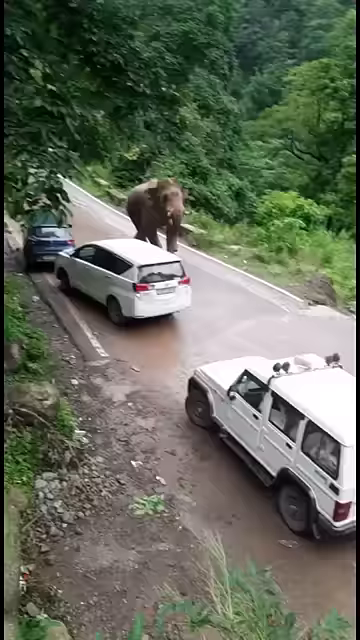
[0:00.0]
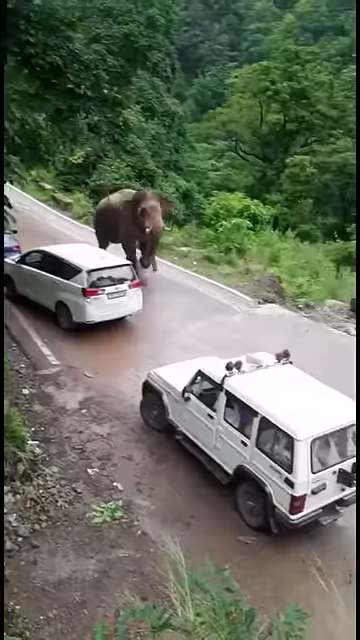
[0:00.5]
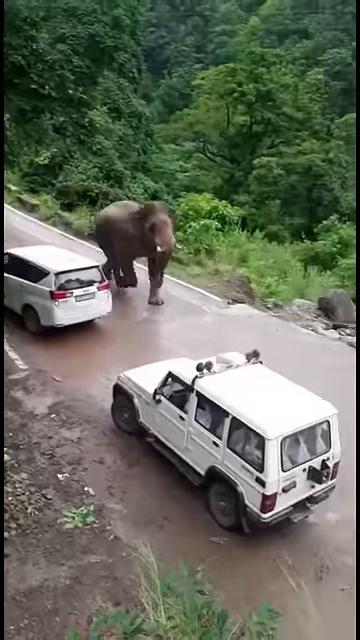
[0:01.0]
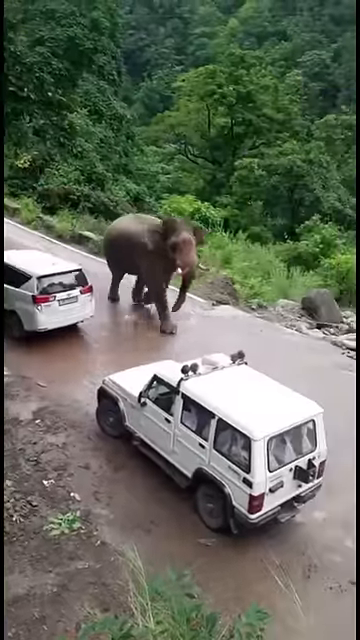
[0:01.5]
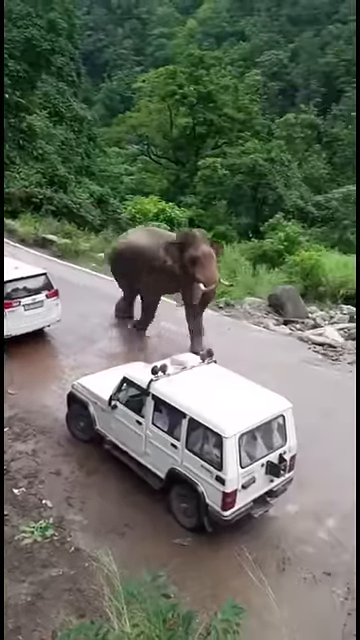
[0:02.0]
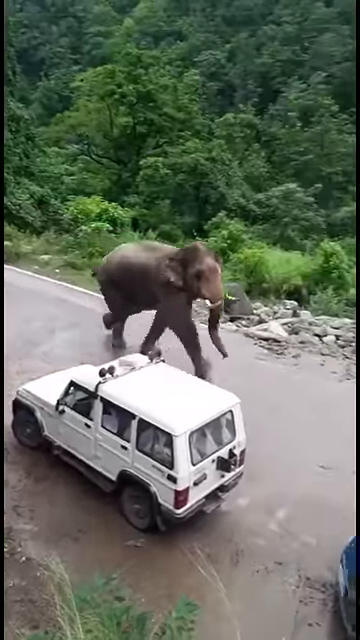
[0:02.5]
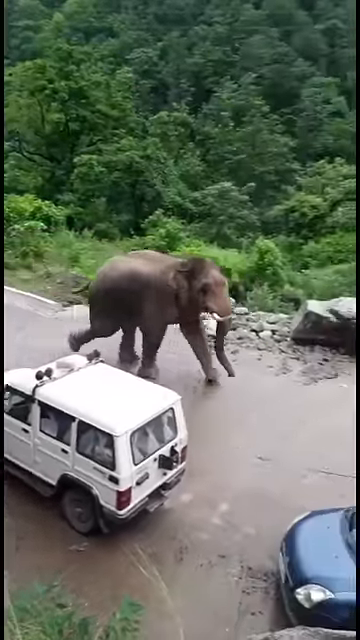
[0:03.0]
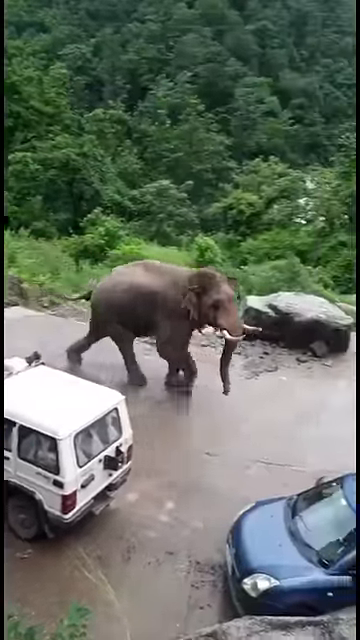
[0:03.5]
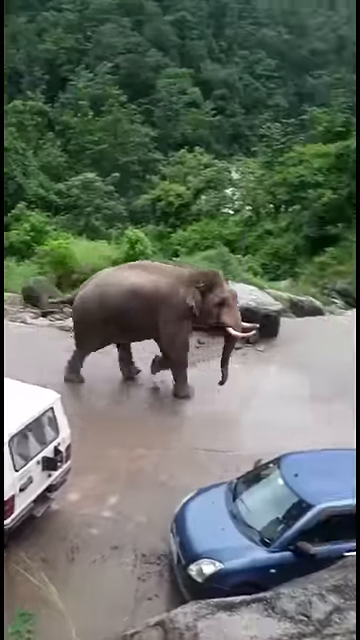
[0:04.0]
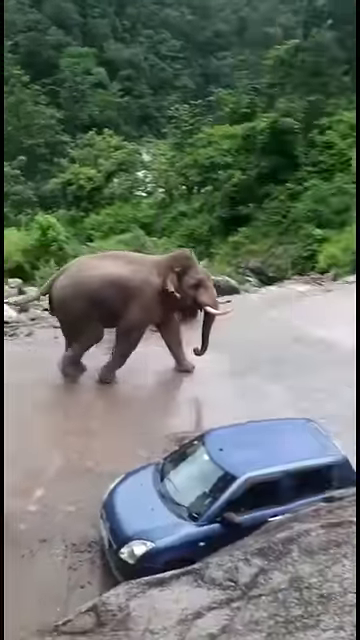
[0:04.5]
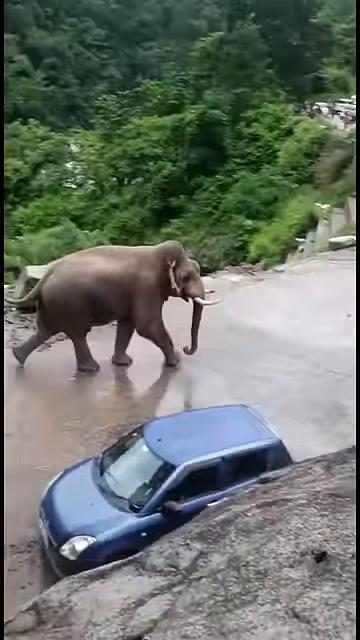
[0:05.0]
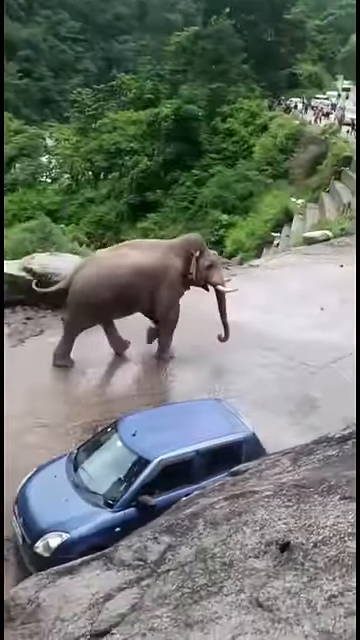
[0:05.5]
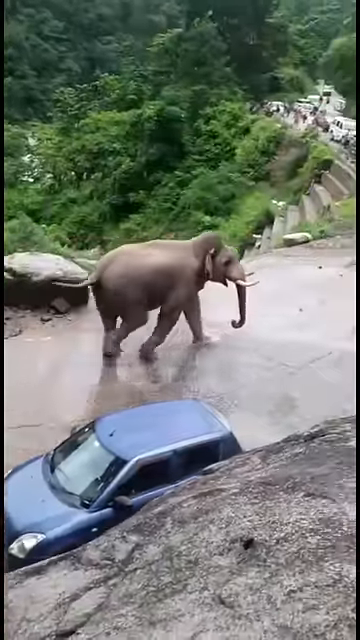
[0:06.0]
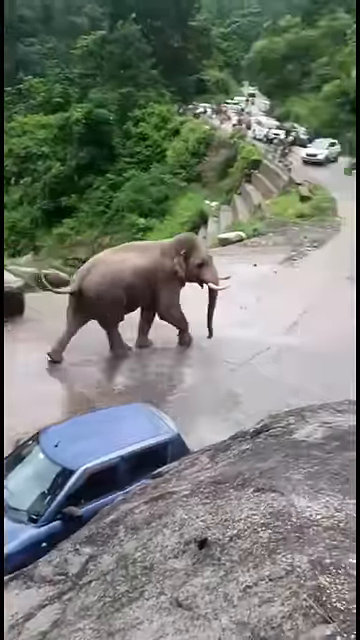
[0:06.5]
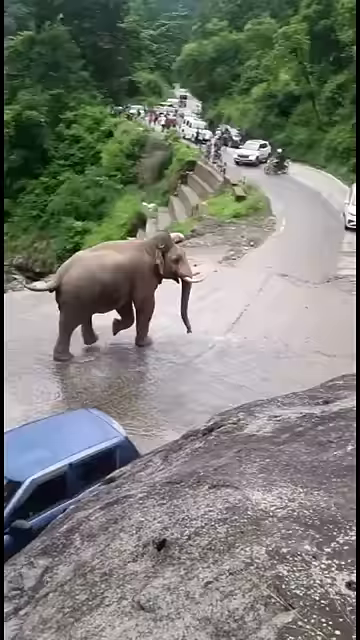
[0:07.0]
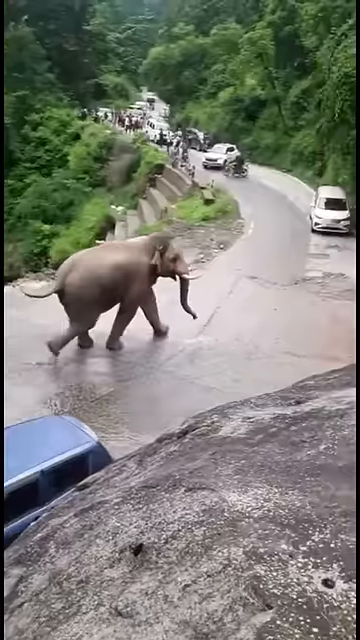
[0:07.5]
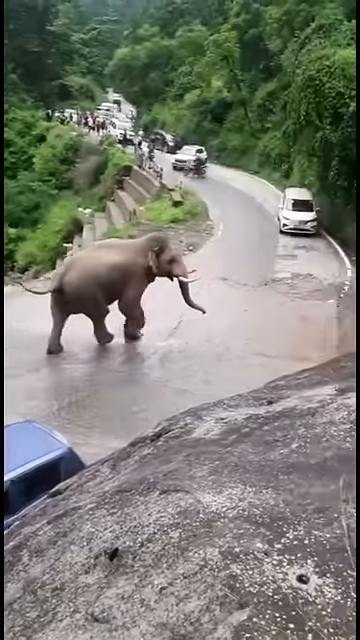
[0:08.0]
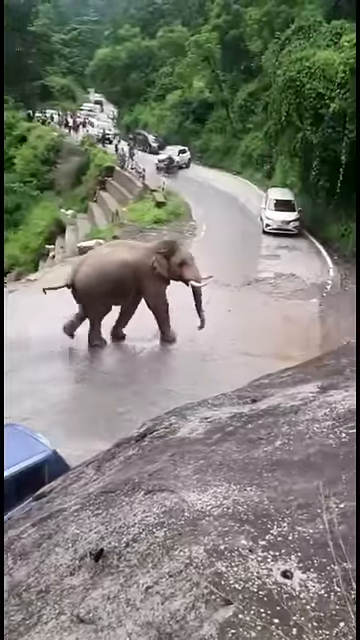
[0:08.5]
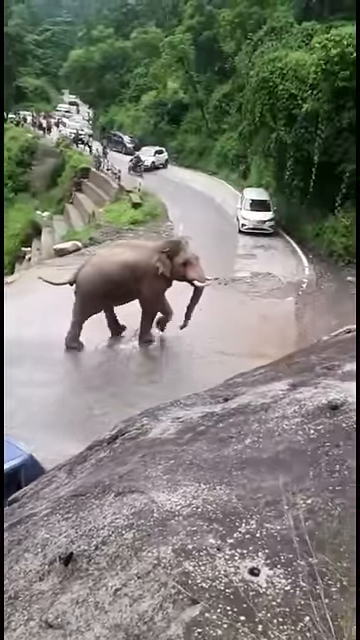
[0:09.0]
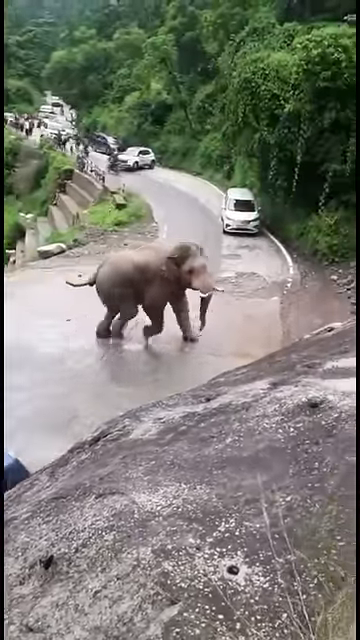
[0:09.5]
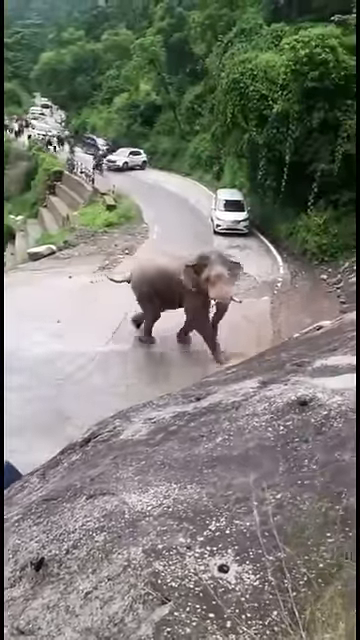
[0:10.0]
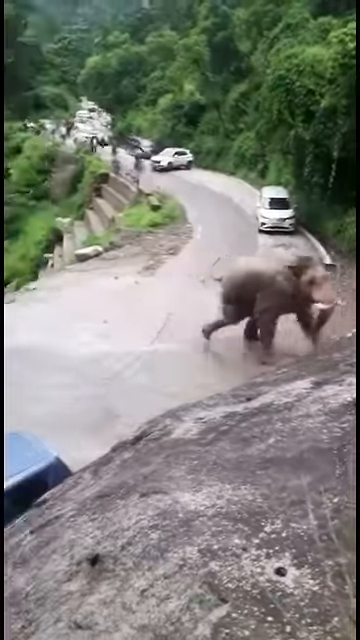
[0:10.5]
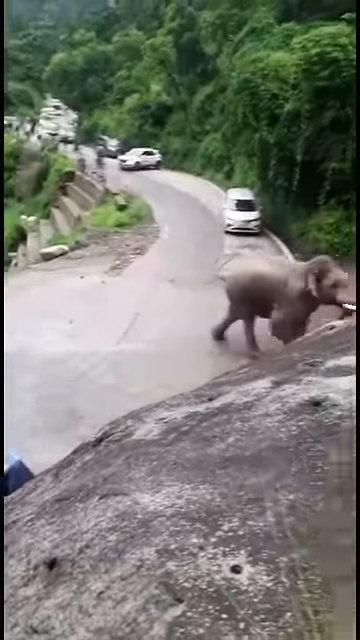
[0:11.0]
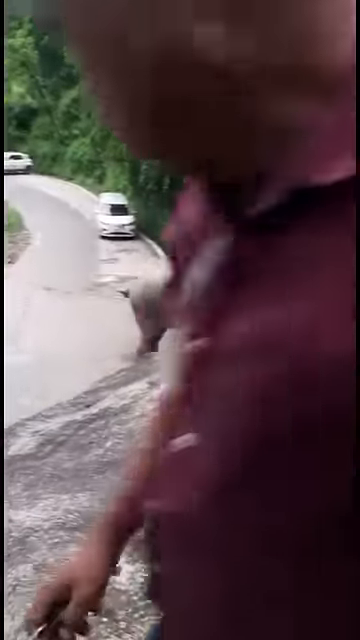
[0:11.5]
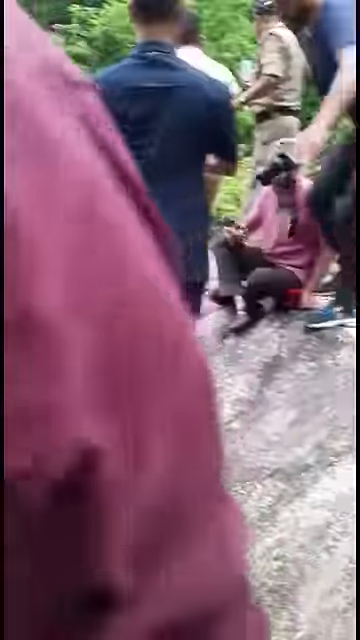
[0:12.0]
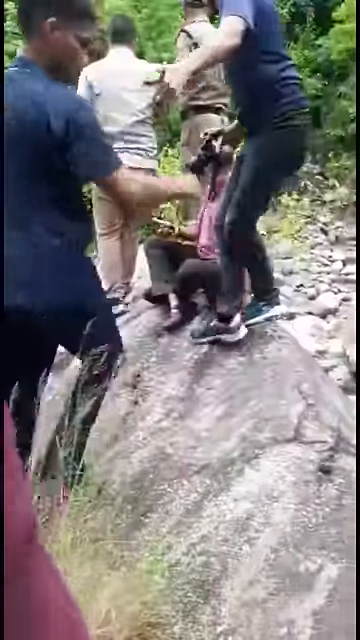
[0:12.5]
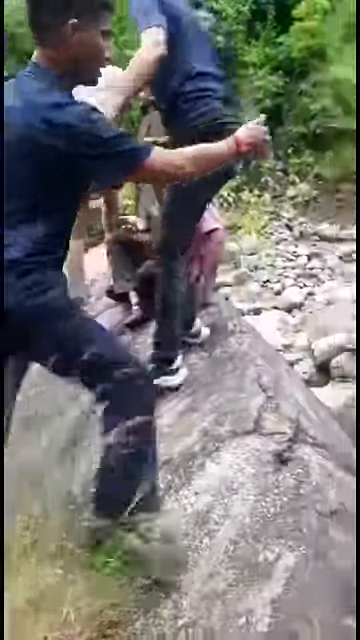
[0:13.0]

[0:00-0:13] An elephant runs very fast on a road next to a bunch of vehicles, including a white van, a white car, a white truck and a blue car. As it runs, people in the background move very fast away from it, unsure what the elephant is going to do; they are all scared. They are all in vehicles or on bikes. Five people on top of a rock are recording the elephant. The elephant keeps running to the right, and it looks like everyone is terrified of it.